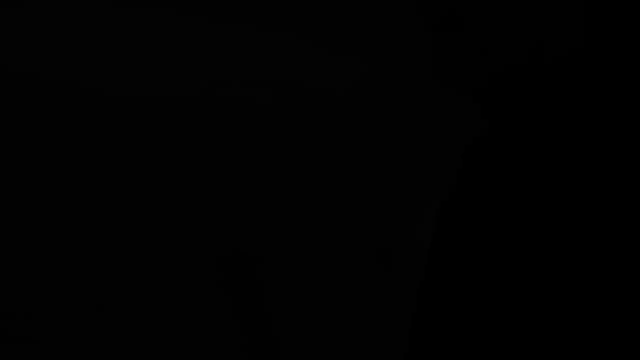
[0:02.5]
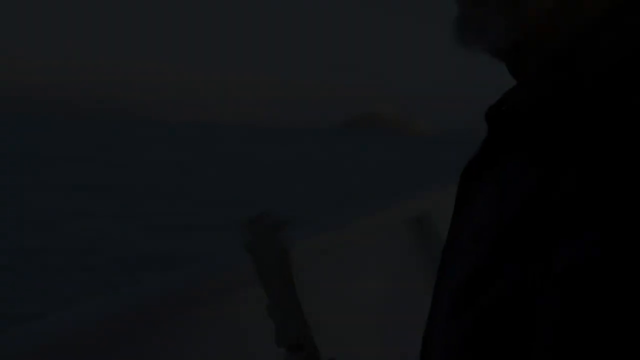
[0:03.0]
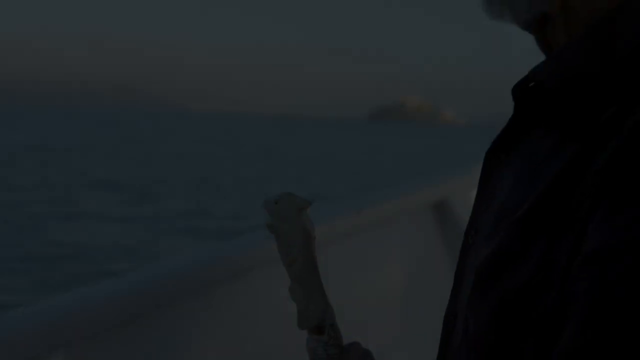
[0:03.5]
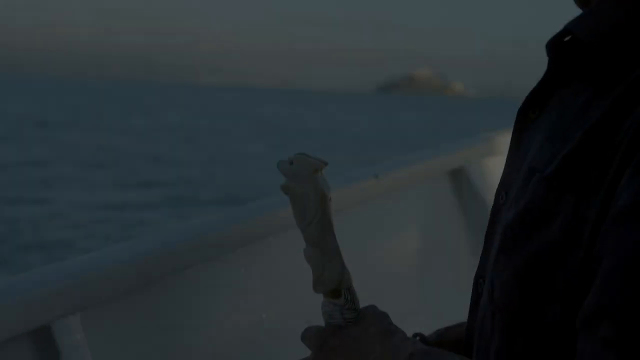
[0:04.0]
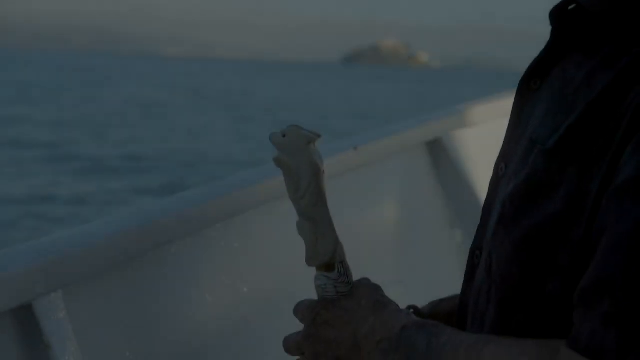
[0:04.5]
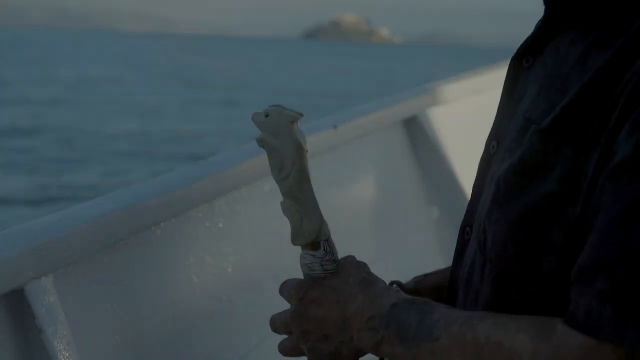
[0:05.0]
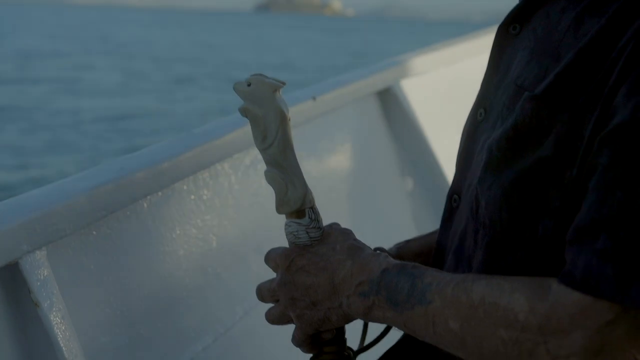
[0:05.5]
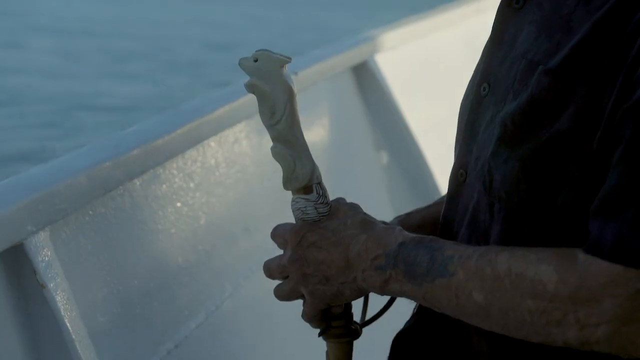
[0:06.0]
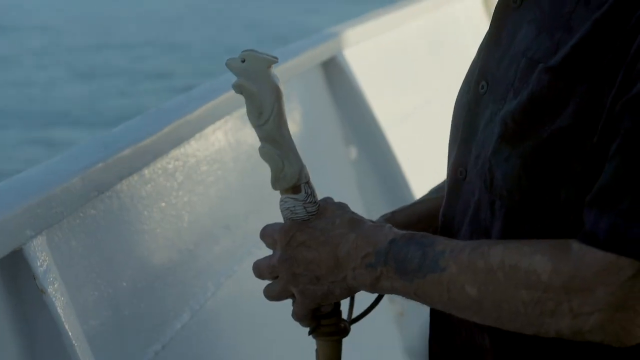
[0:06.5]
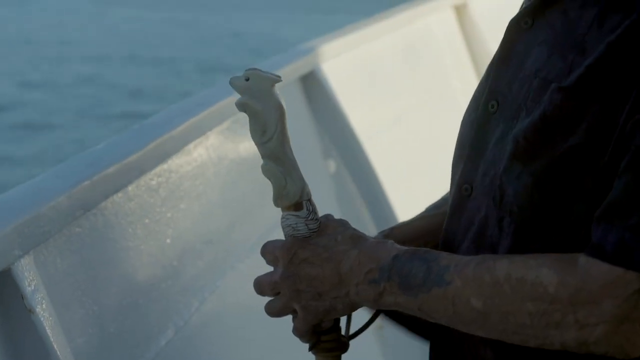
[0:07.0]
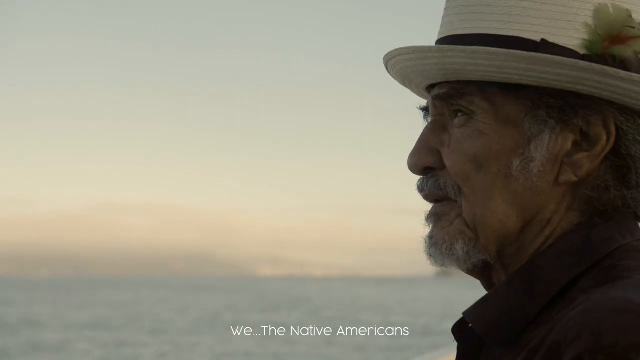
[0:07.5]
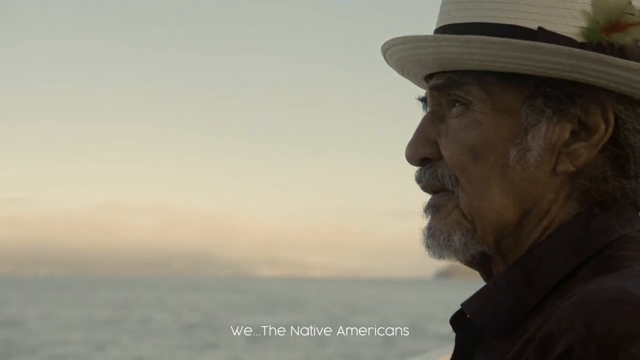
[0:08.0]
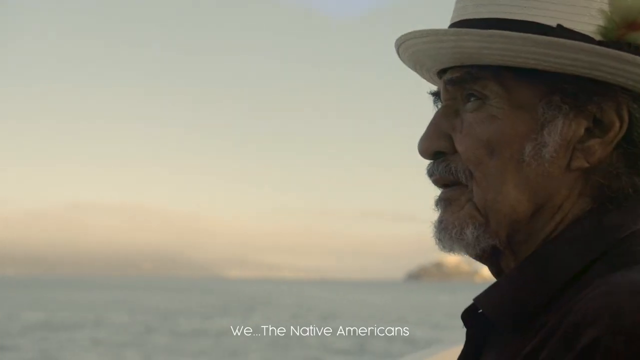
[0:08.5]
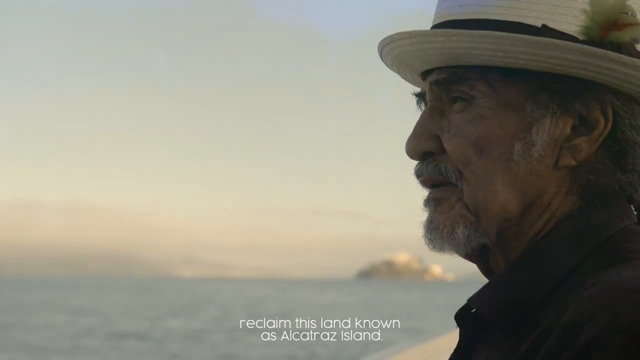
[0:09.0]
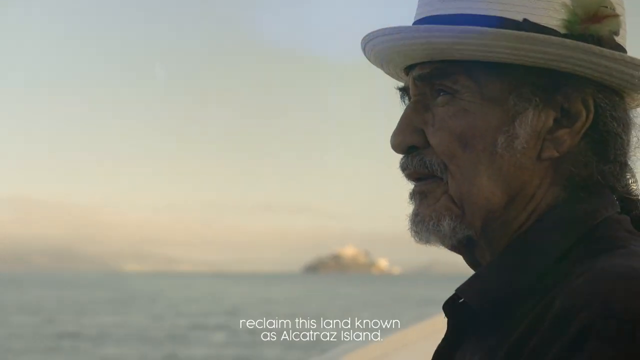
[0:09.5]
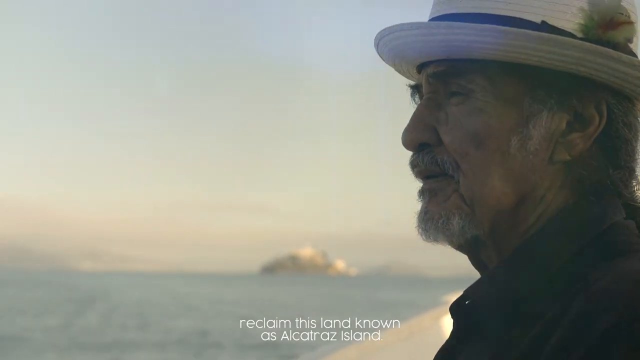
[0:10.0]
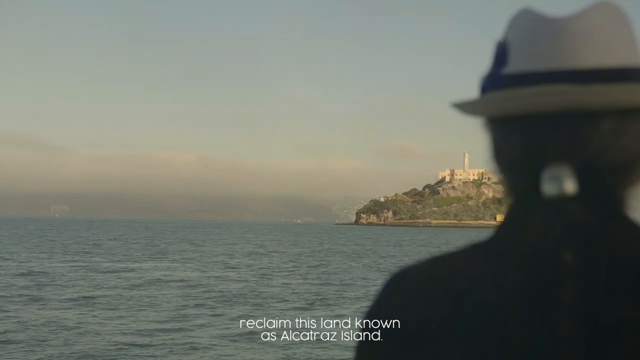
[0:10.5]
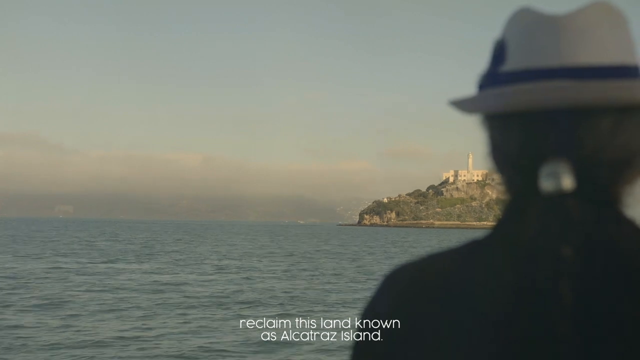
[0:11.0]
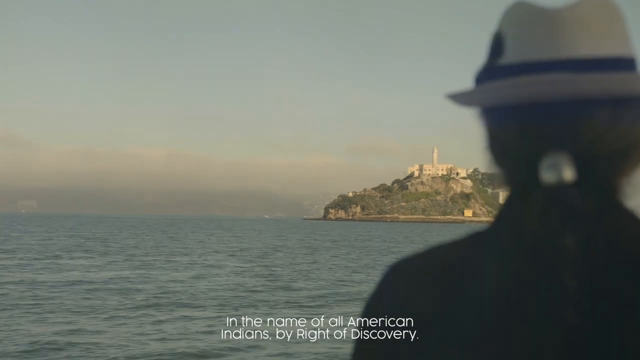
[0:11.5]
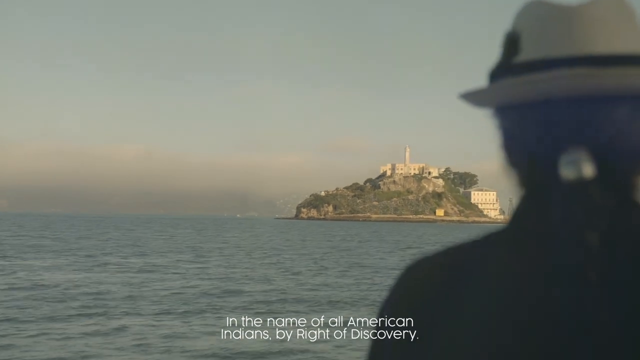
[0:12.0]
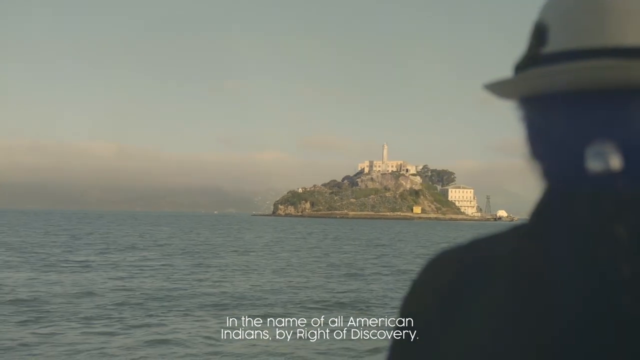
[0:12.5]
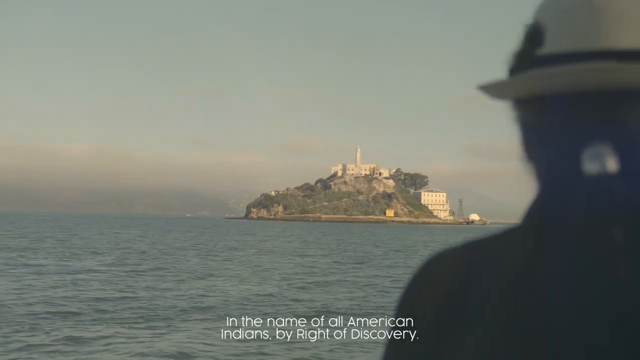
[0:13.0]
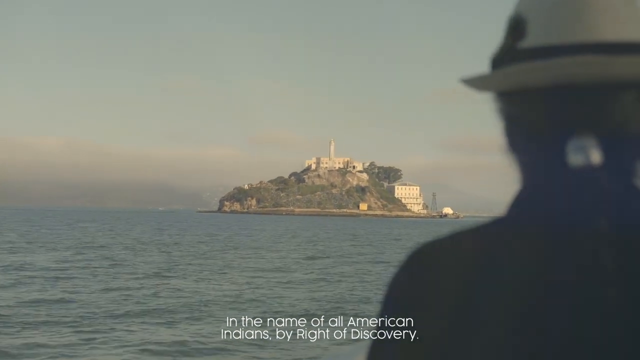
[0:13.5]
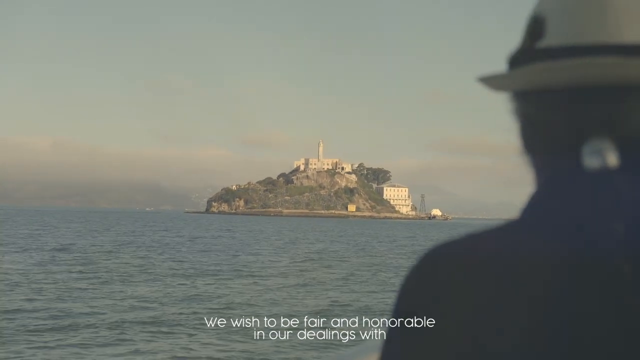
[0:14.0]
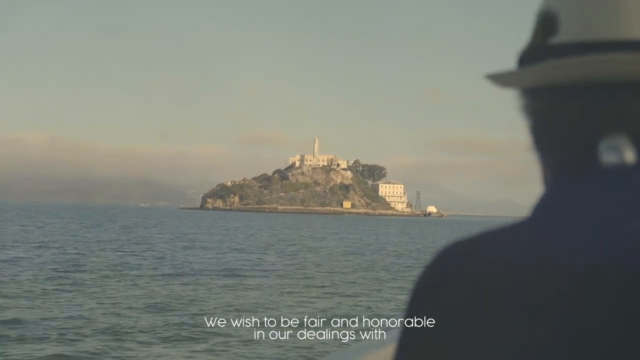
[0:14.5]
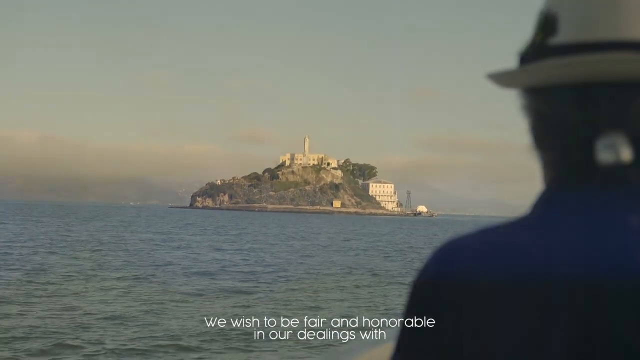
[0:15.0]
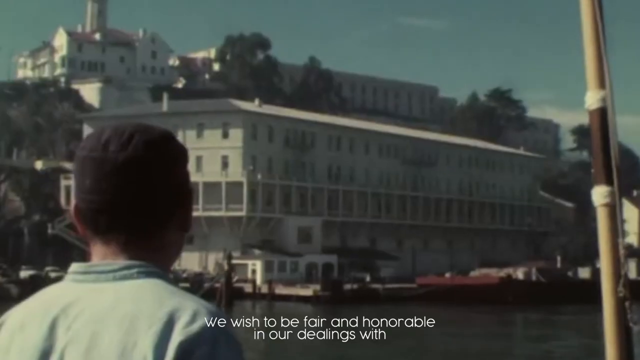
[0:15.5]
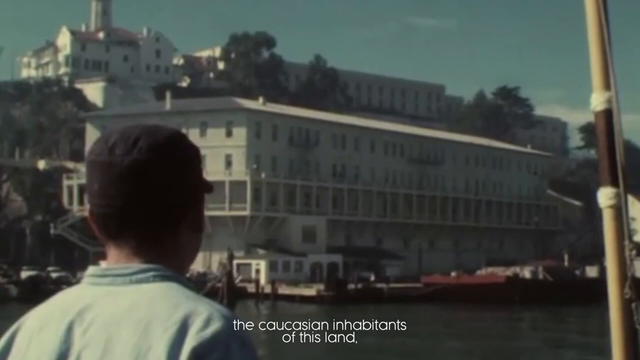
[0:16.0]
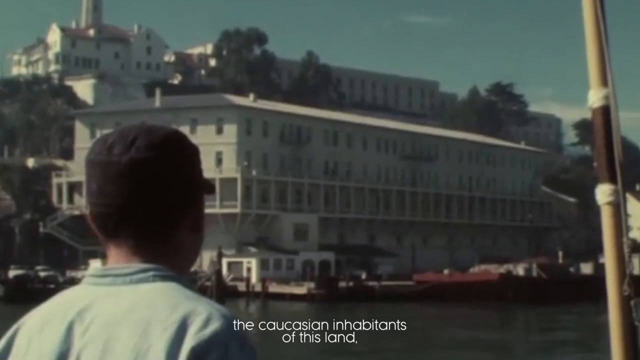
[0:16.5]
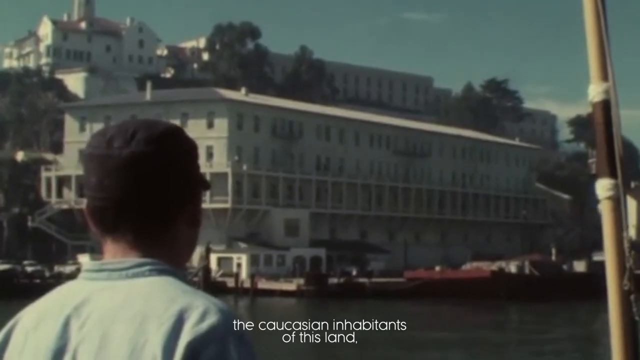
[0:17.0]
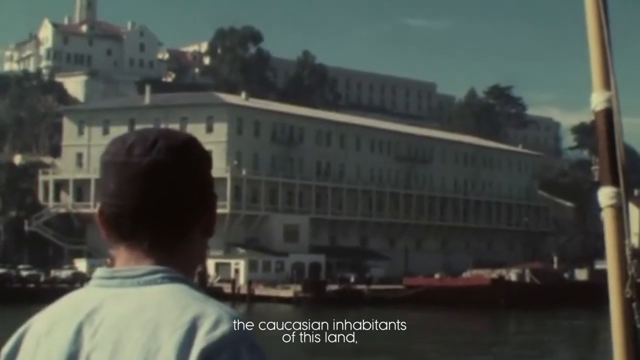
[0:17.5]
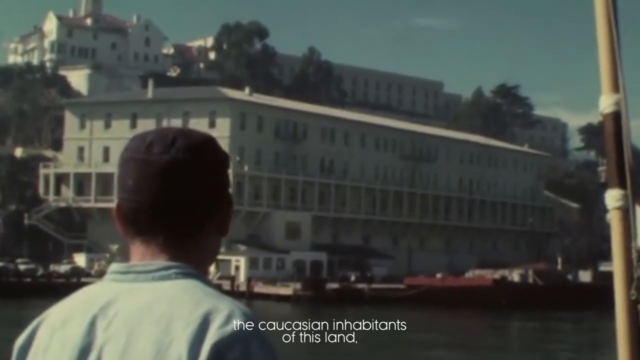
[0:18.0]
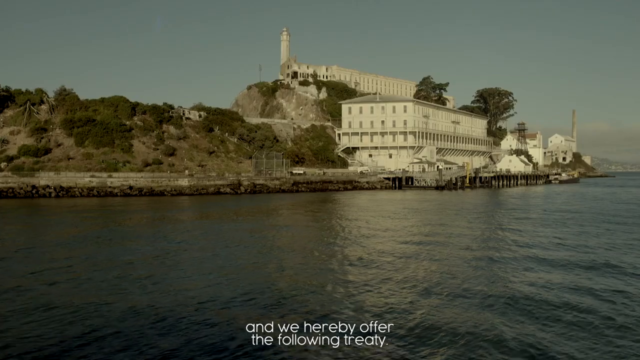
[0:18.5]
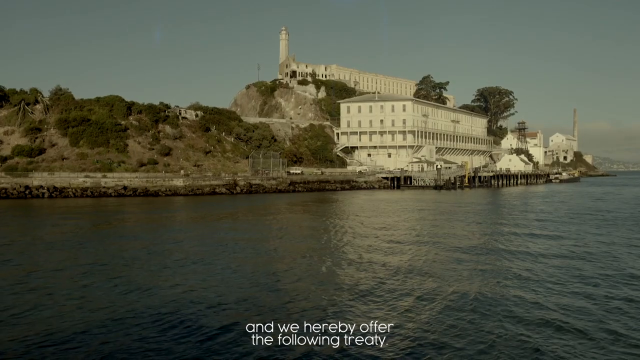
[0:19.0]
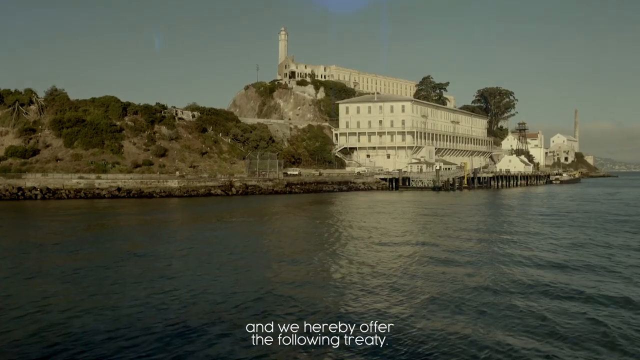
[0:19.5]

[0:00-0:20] The video opens on a black screen, then shows a person in front of the camera who appears to be riding a boat. They have both hands on some kind of object, like a stick, topped with what appears to be an indented cat figurine, like a white animal. The inside of the boat is white, and a large, very blue body of water is visible at the top left. The person holding the stick-like device wears a black button-up shirt. The view zooms downward, showing the person's left wrist. The scene changes to the person's face: he has a slightly darker skin tone, wears a white hat with a black strap, and is older, with a mustache and beard. The shot focuses on the left side of the man's face, then cuts to the back of his head as he looks into the distance at an island far away. The island has white buildings on top and a lot of grass on the side of the hill or mountain. The sky has a very grayish tone, and it is probably afternoon. The scene changes to what looks like an older recording of the back of the head of a man wearing a black hat, with some large buildings in view. In a final scene change, the buildings grow closer.